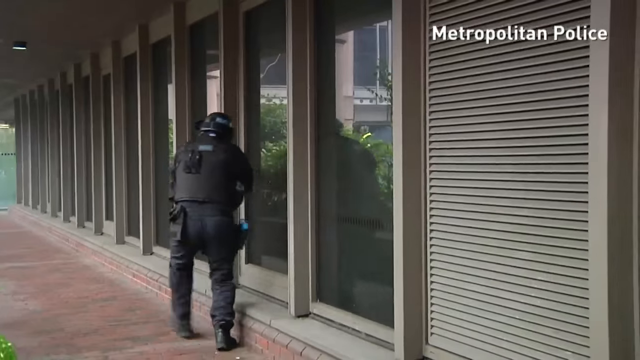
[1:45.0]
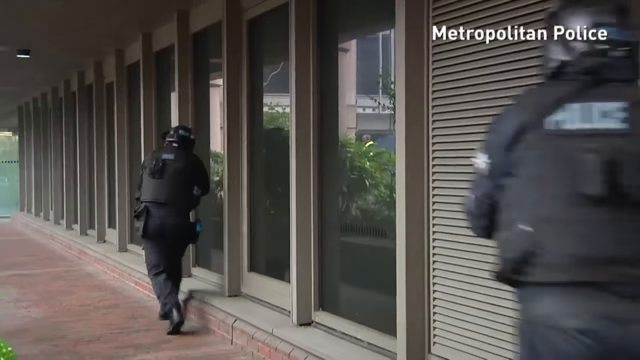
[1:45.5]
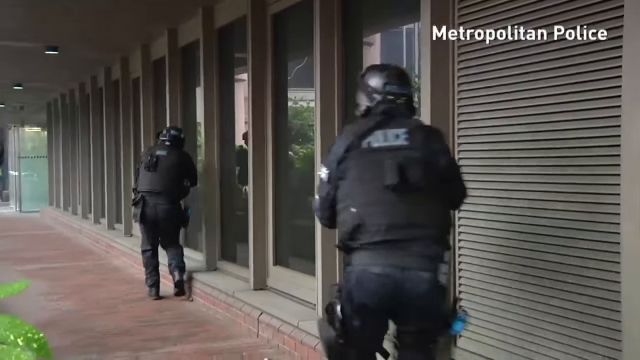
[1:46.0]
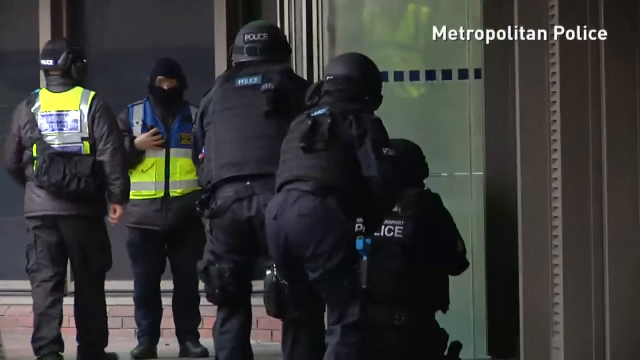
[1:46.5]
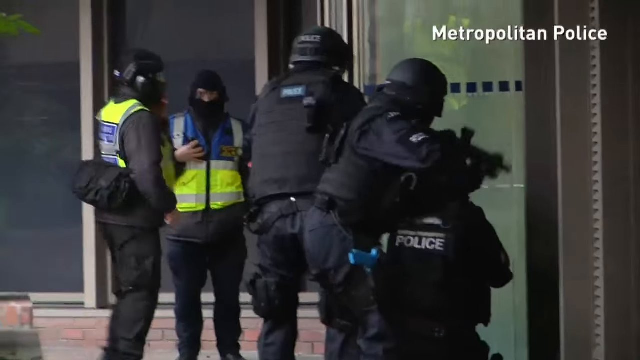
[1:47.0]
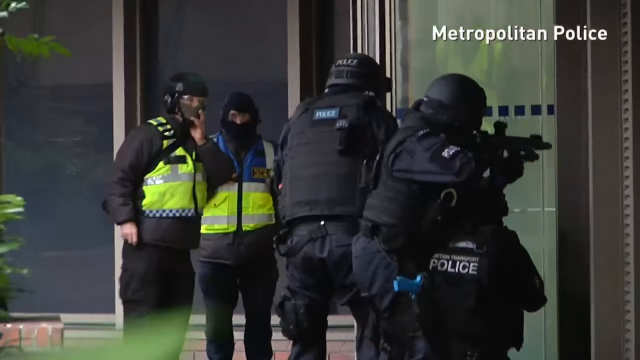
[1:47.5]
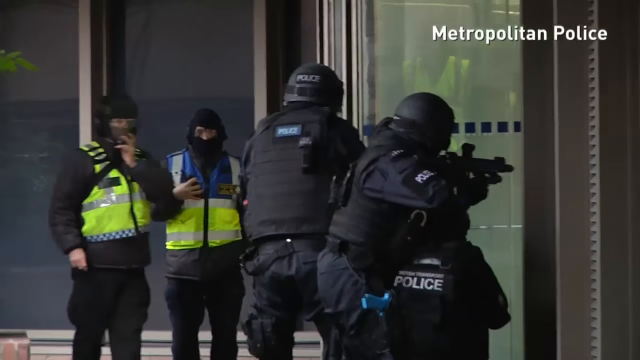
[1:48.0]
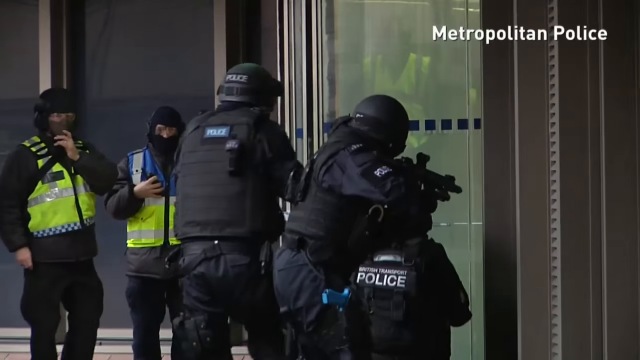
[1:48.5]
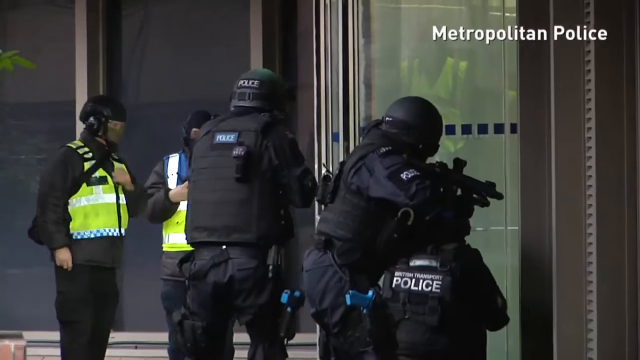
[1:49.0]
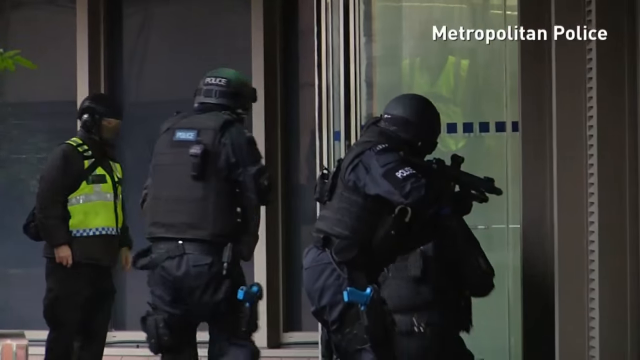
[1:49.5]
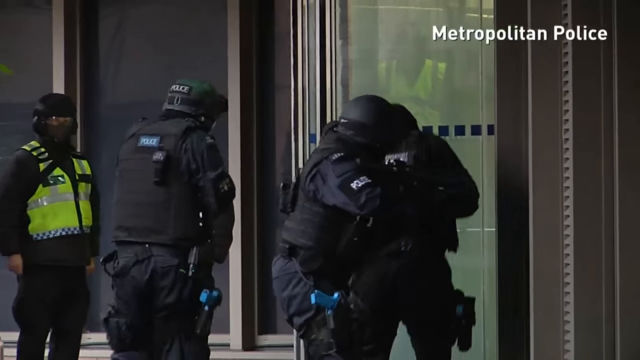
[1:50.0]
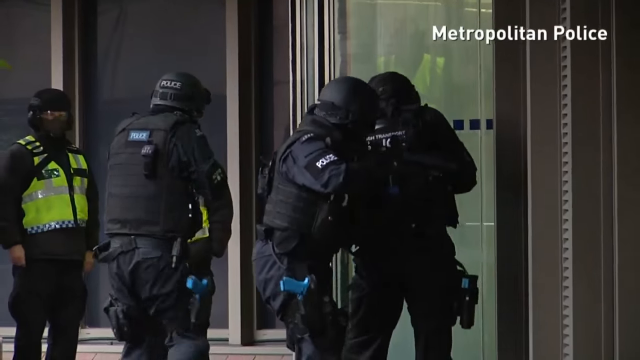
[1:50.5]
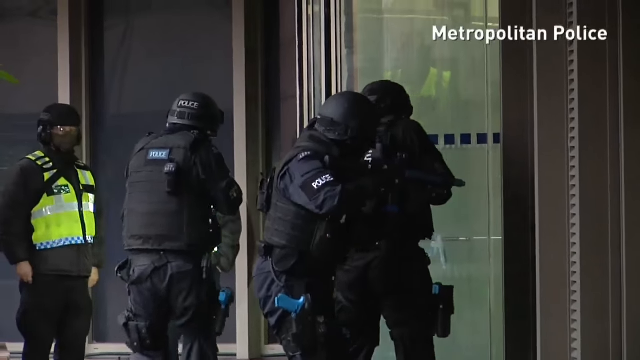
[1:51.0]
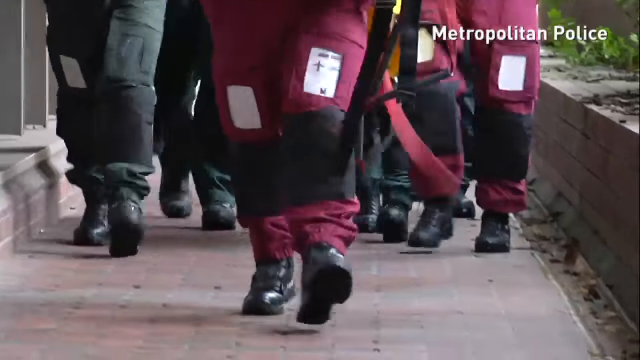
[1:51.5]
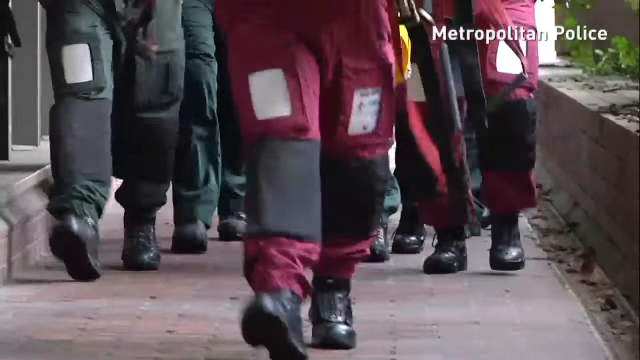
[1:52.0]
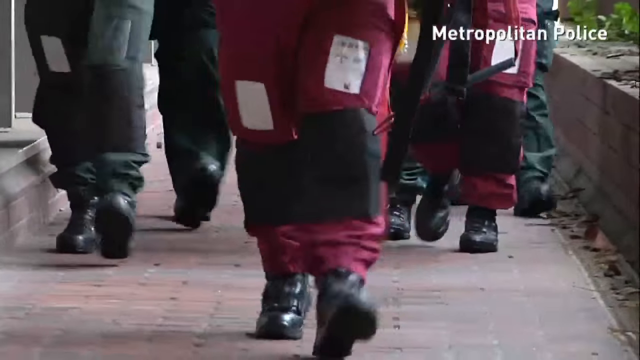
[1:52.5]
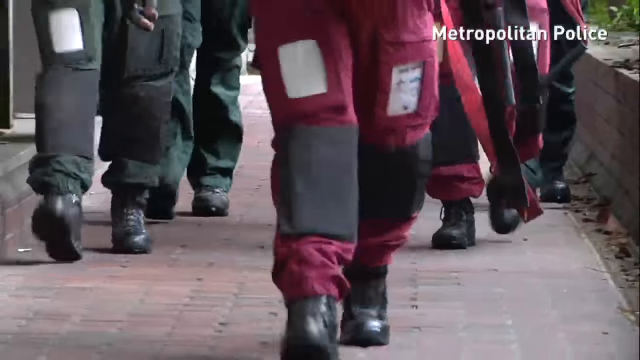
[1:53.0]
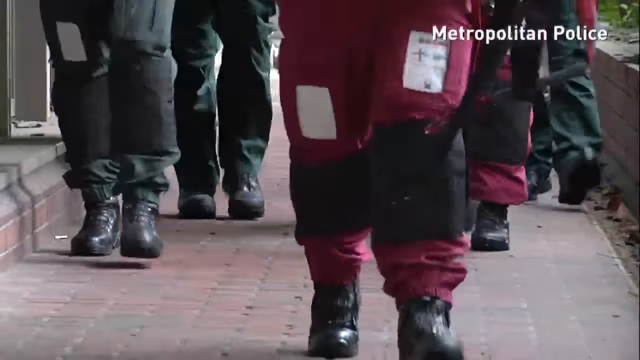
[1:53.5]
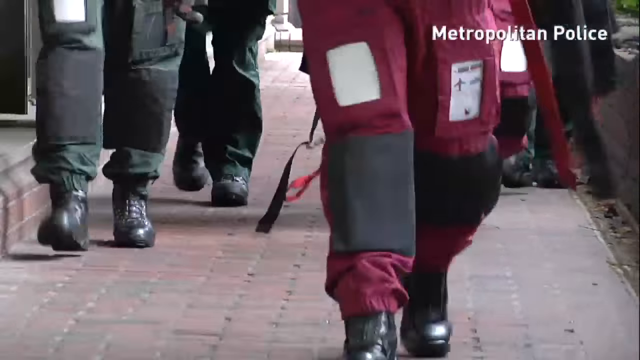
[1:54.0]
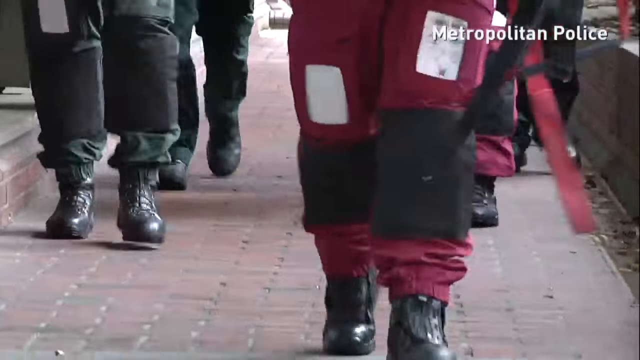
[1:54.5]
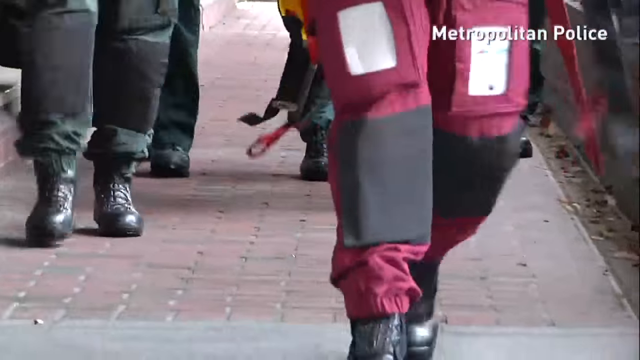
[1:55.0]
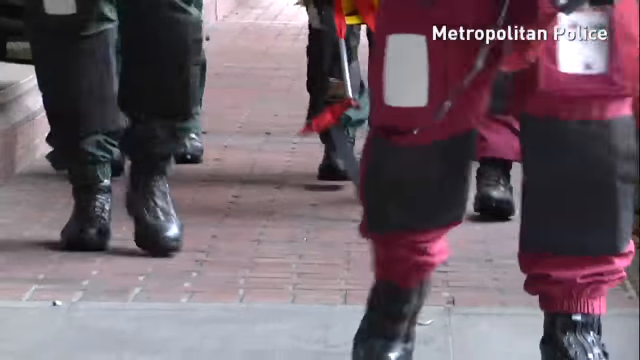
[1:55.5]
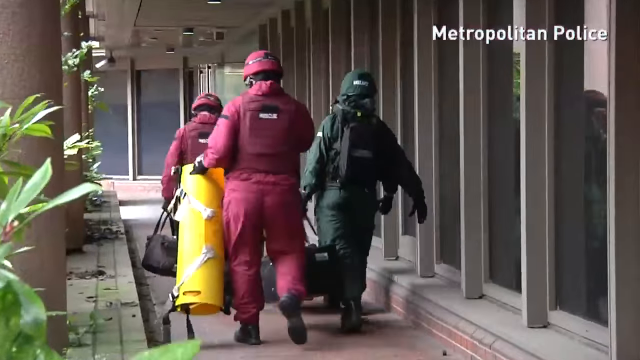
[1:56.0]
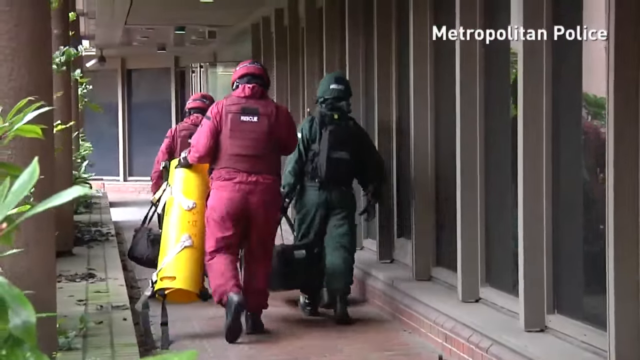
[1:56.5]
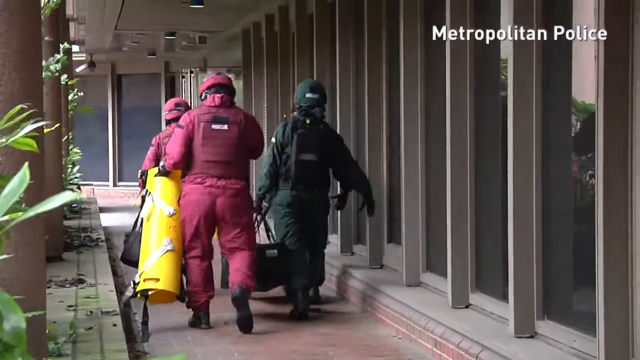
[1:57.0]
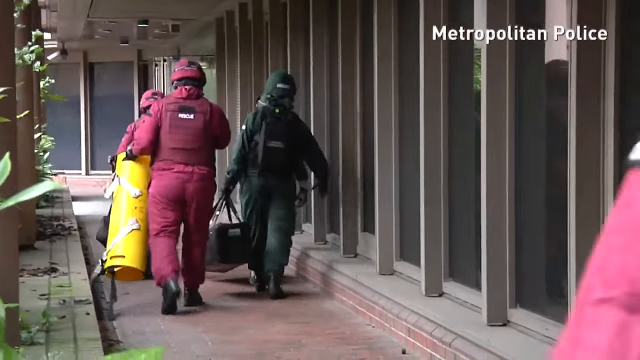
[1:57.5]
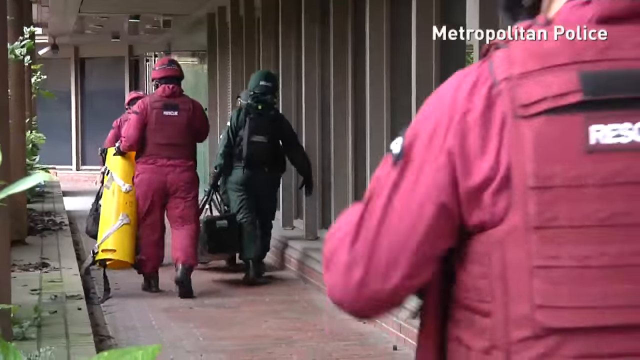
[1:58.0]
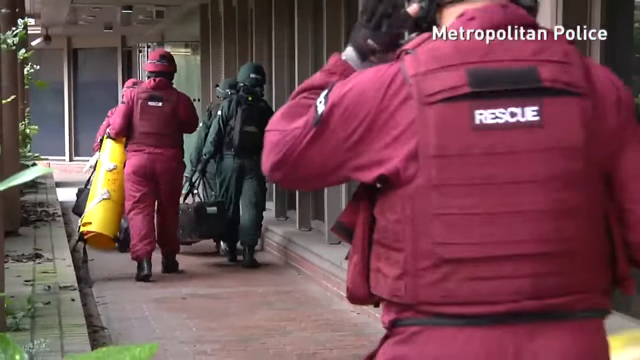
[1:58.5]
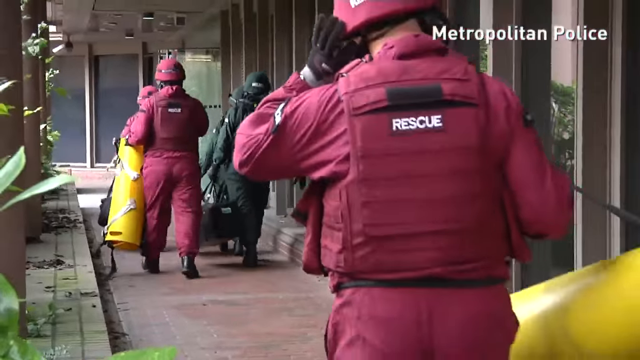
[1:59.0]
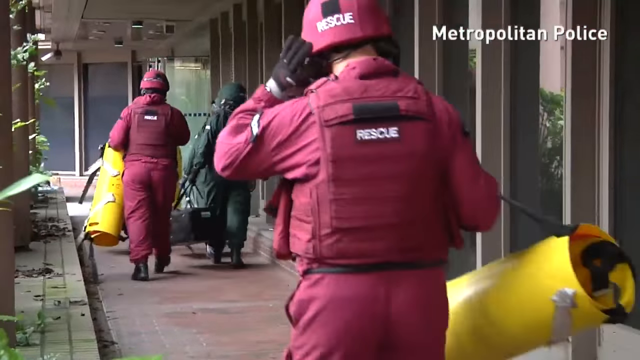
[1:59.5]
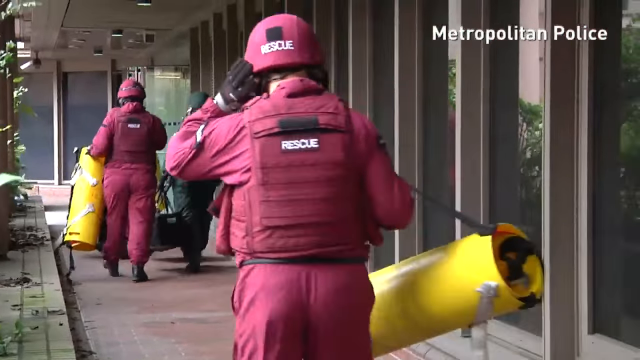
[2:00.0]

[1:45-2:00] The police keep circling the building, even pointing their guns at a window, apparently searching for one more attacker or checking that none remain. Some men in red appear, marked "rescue," with the same yellow body bags, apparently coming to take away the remaining bodies of the men, women and children. The police are still circling the building.